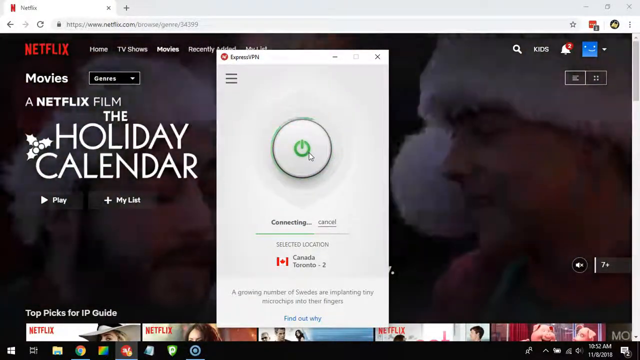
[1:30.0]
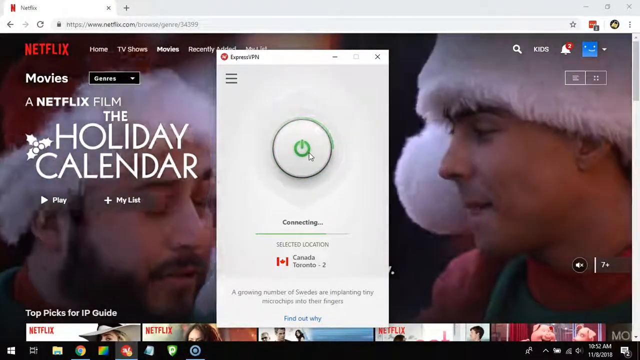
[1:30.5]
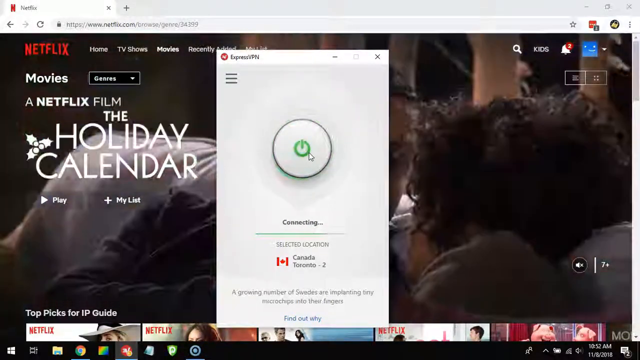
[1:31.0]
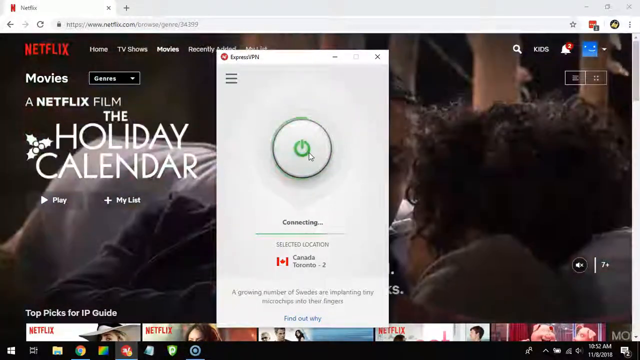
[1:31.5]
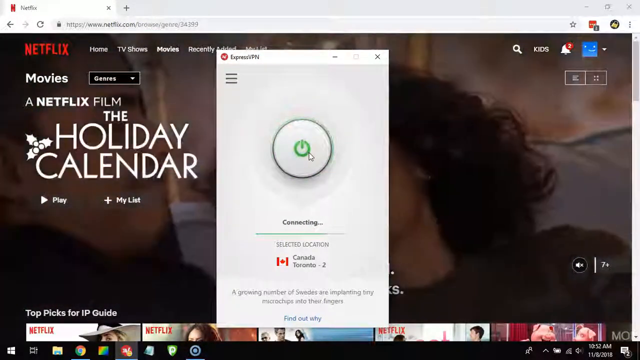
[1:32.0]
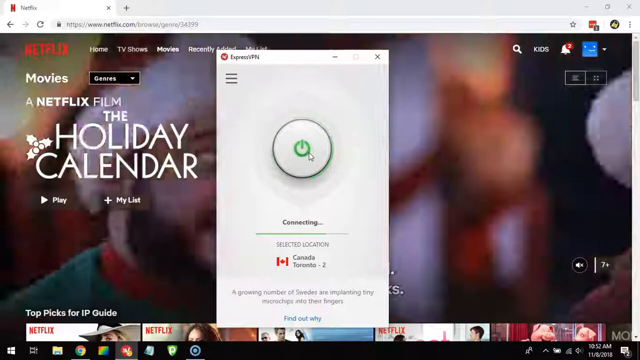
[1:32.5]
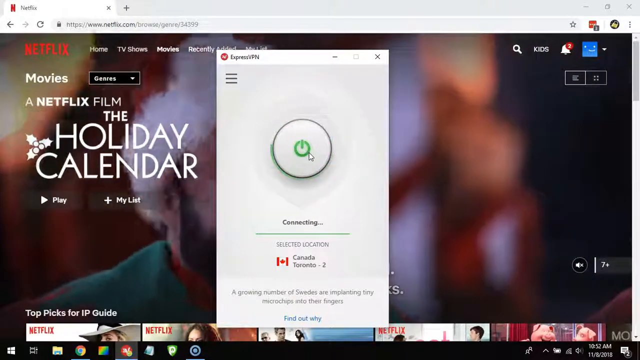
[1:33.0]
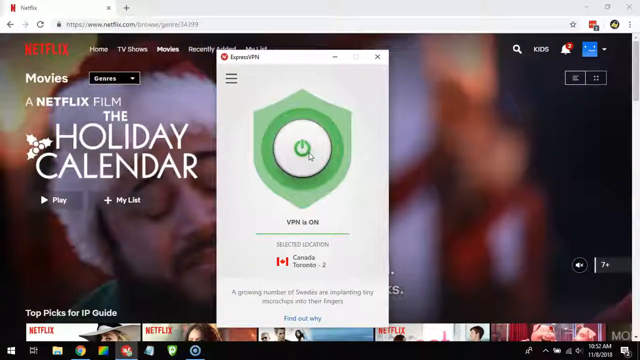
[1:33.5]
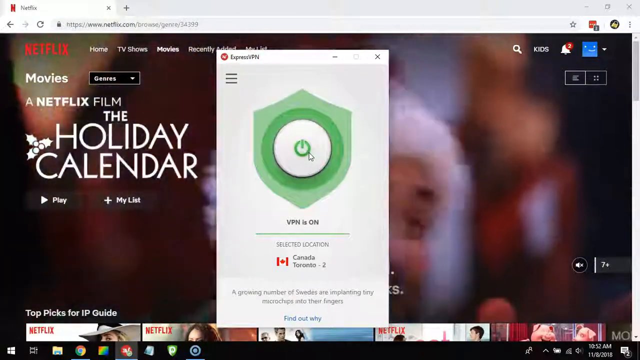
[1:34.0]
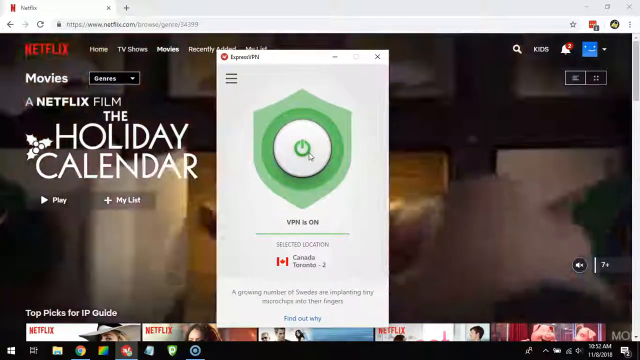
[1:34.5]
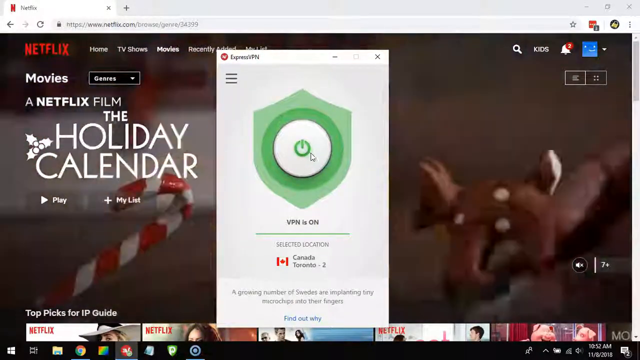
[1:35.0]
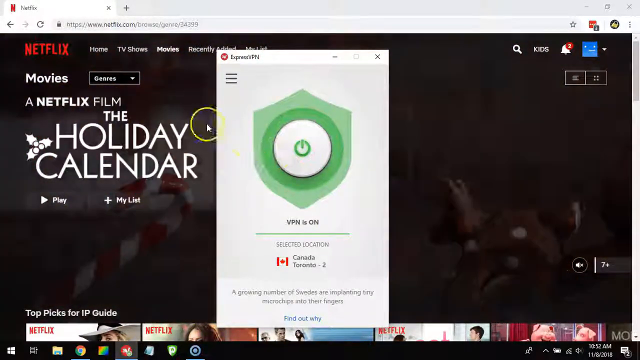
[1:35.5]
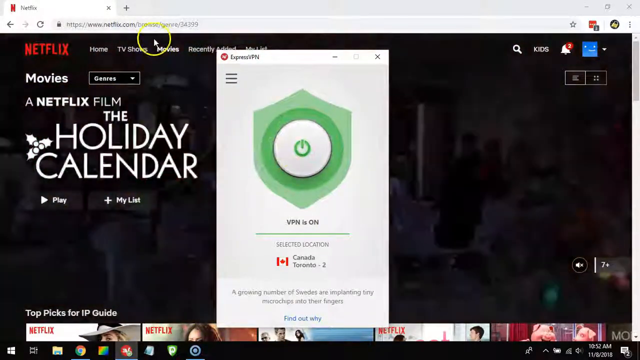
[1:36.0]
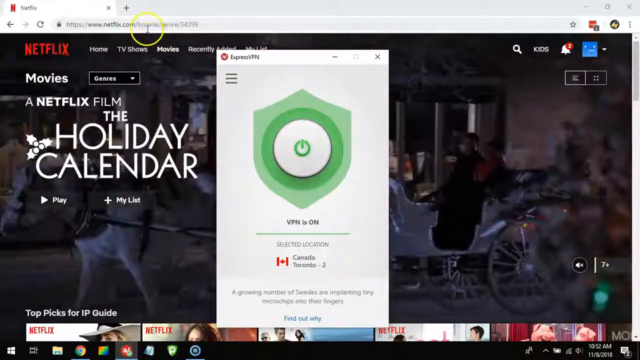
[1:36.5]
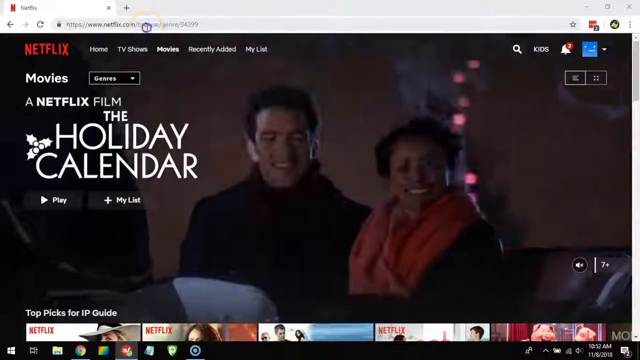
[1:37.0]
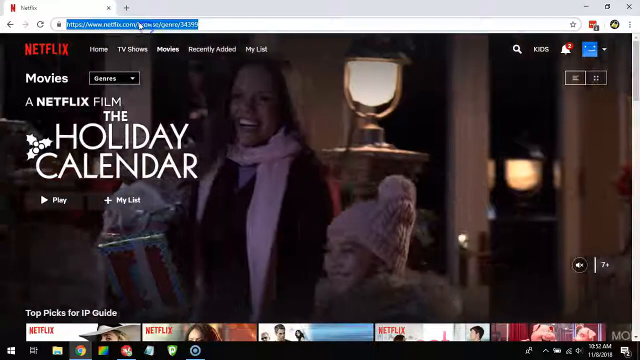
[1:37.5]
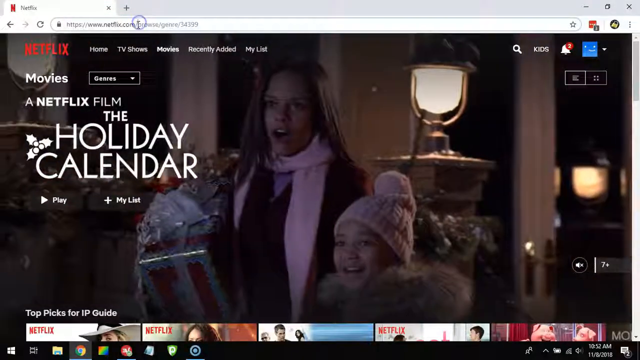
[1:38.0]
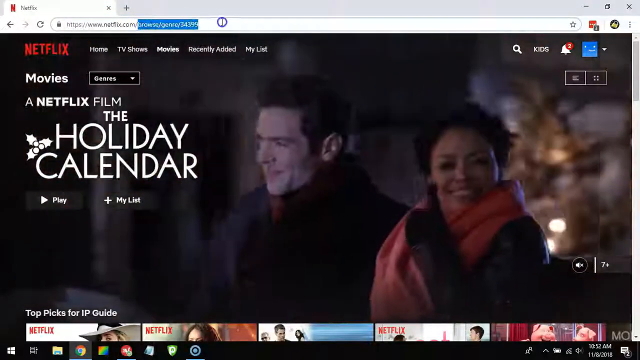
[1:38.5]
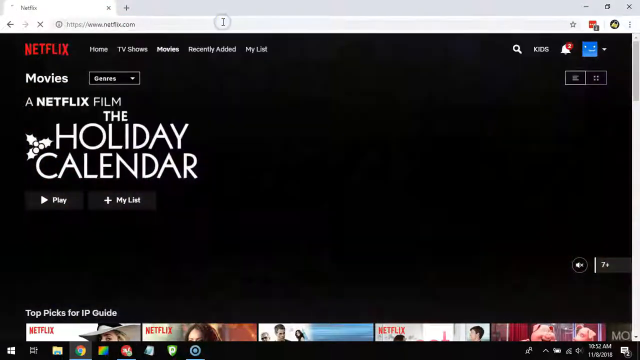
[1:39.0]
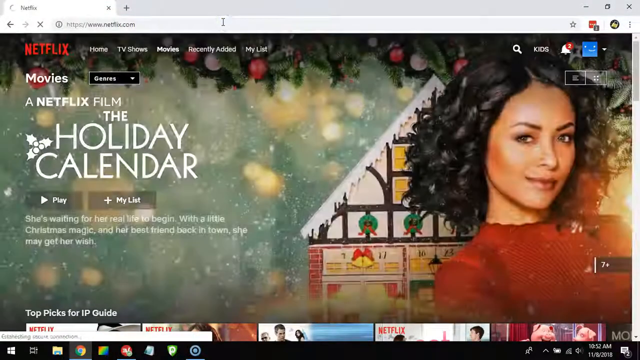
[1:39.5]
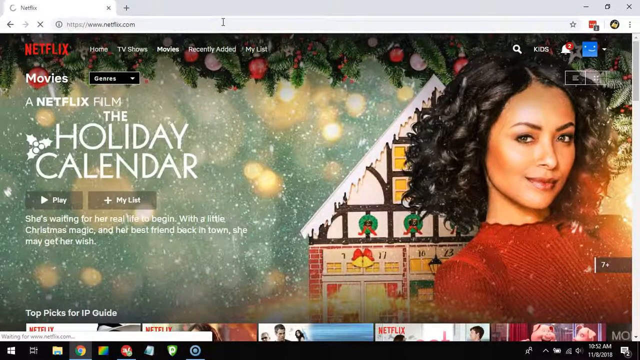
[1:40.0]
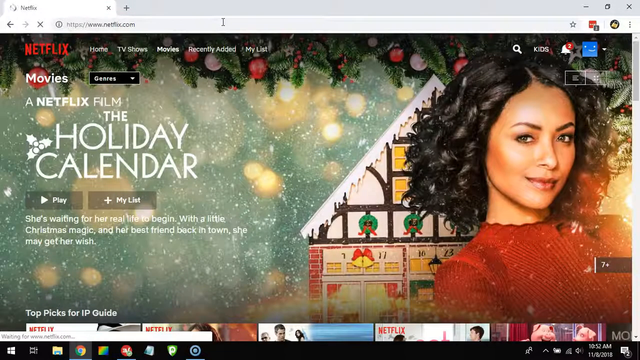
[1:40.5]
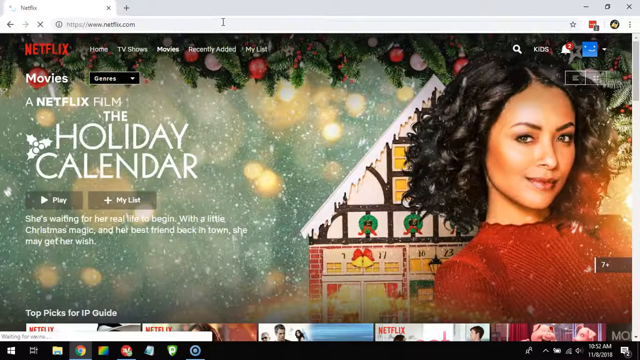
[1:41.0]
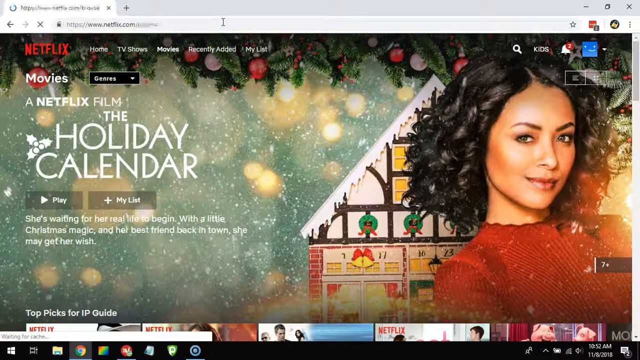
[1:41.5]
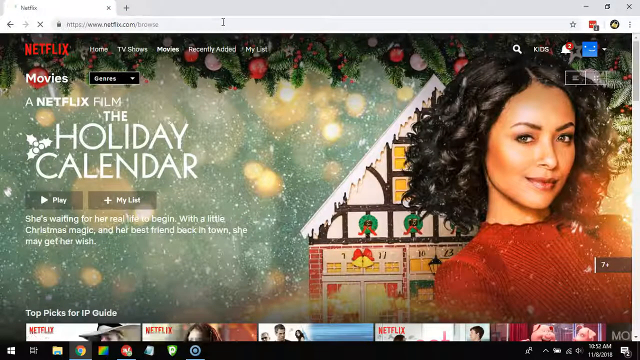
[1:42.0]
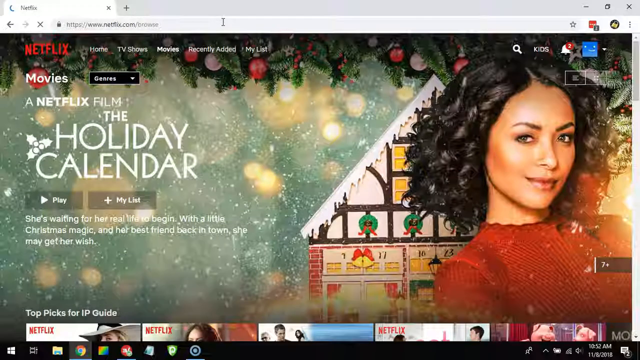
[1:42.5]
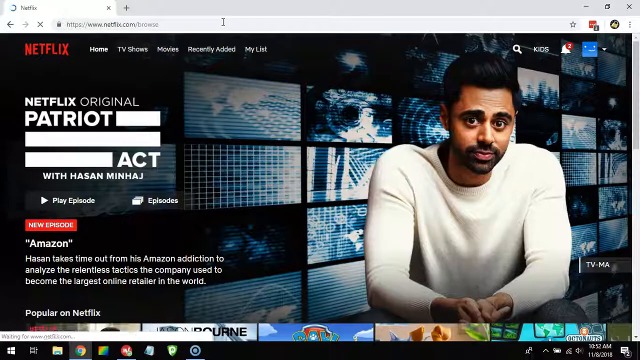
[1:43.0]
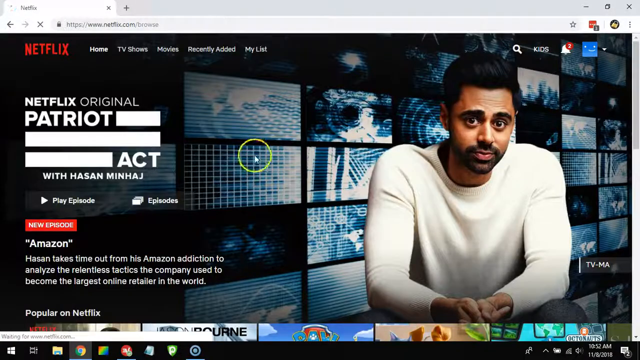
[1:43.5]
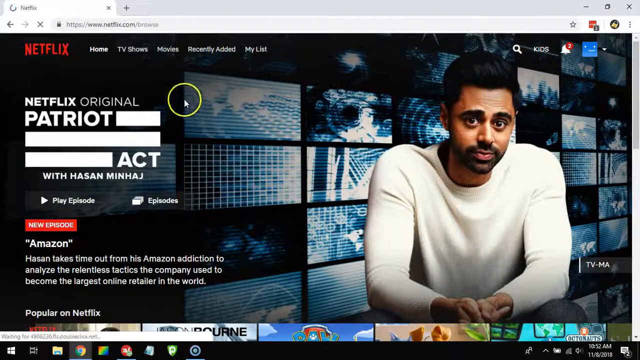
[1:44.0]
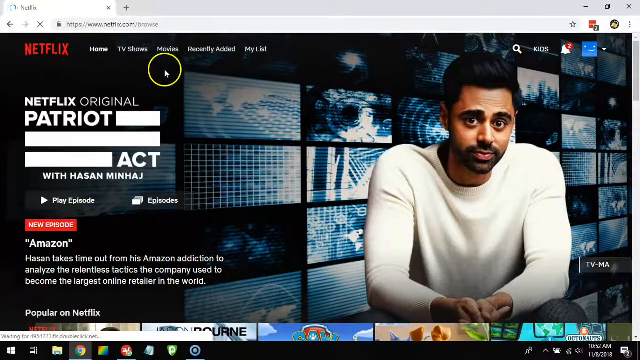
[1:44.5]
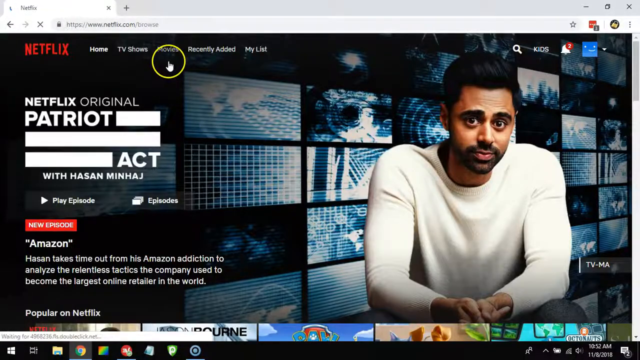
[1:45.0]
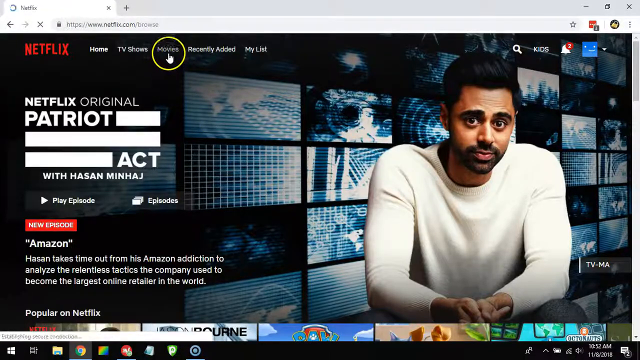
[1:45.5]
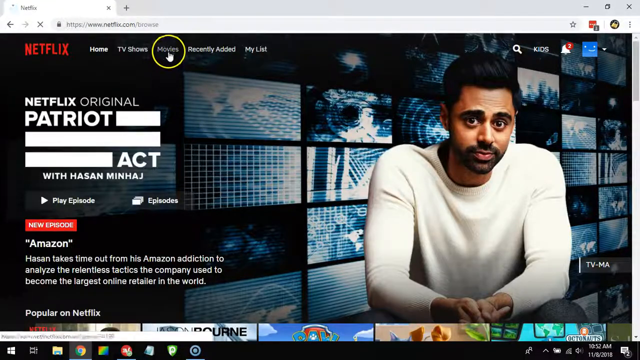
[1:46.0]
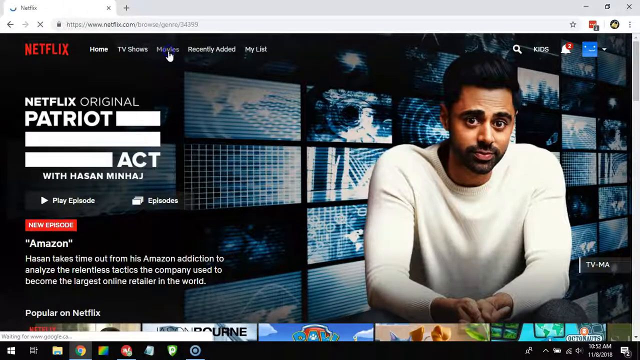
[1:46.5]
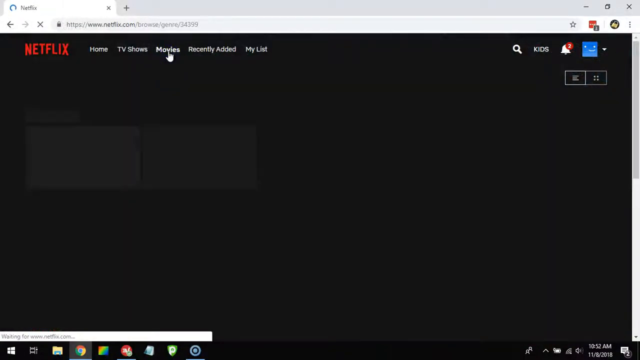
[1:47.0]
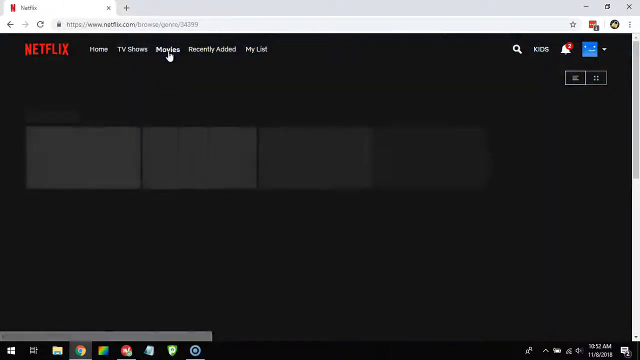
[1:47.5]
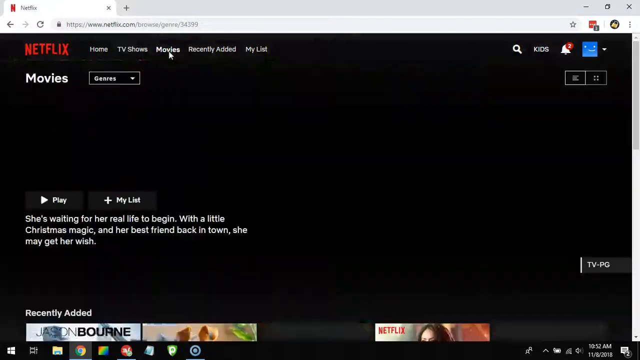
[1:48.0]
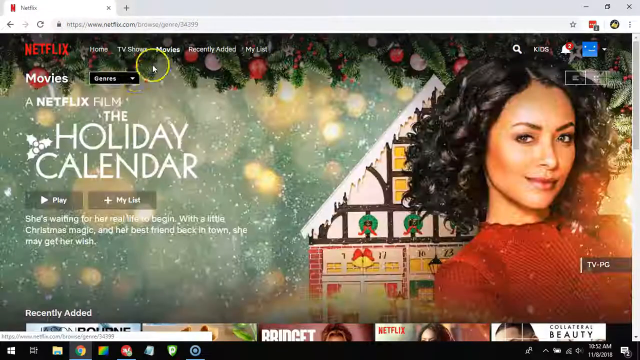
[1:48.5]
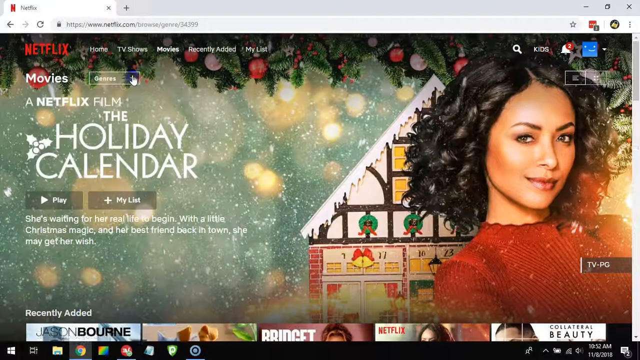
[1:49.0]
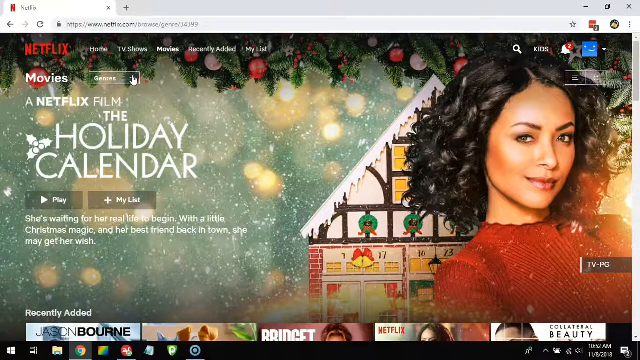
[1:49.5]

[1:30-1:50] With Toronto 2 selected, the VPN is turned on and a shield pops up around the button: a green outer circle with a shield emblem. The person then goes to the browser's address bar, deletes everything after netflix.com and presses enter, and the page goes to www.netflix.com/browse. Movies and then genres are selected, and the video pauses.